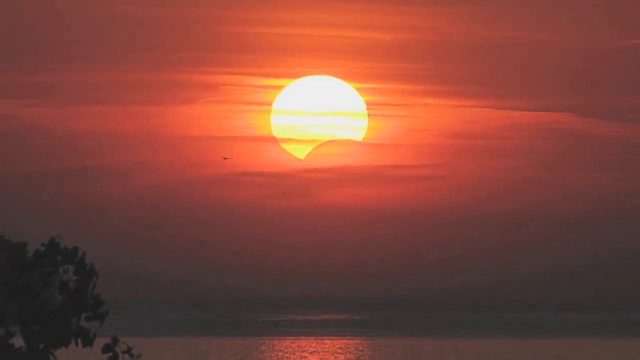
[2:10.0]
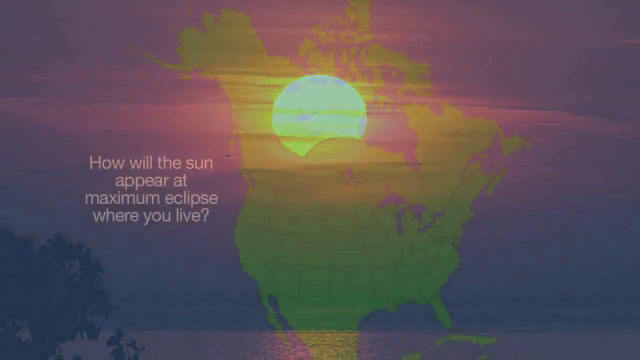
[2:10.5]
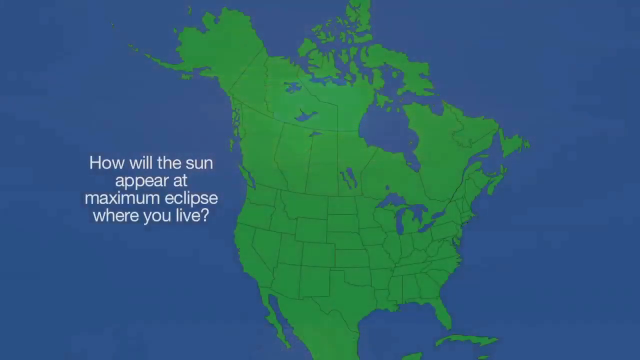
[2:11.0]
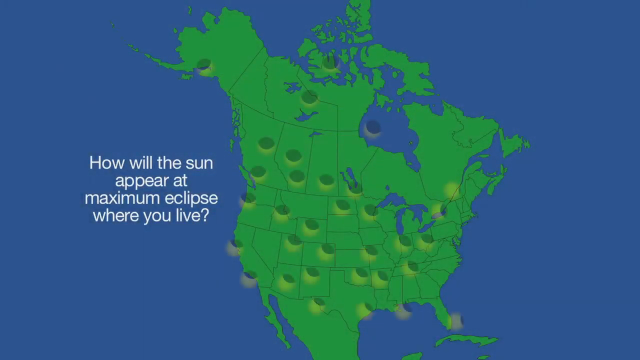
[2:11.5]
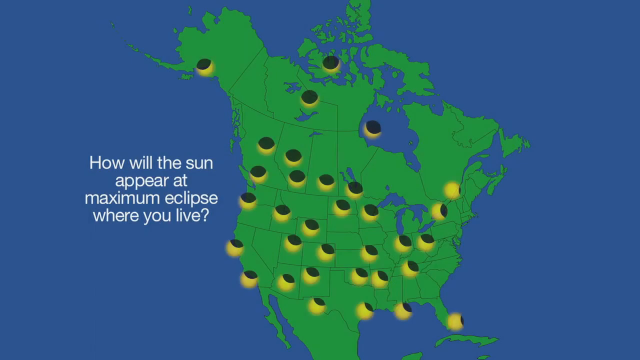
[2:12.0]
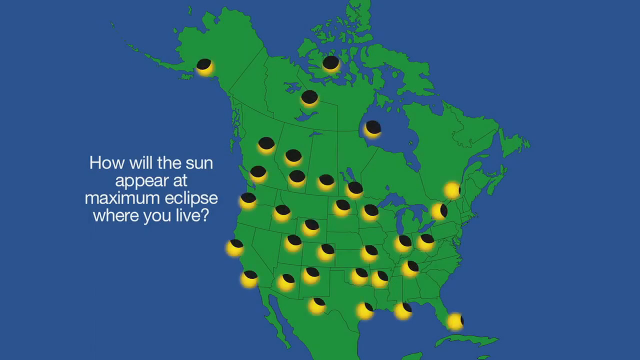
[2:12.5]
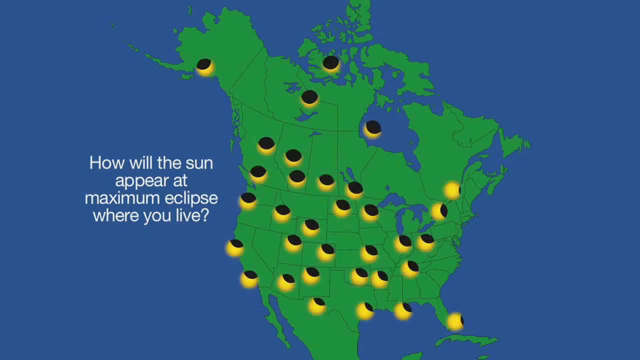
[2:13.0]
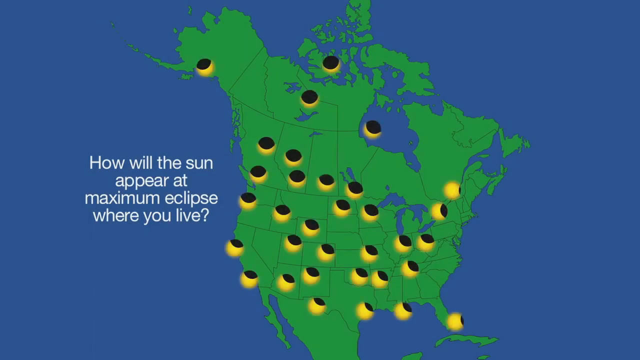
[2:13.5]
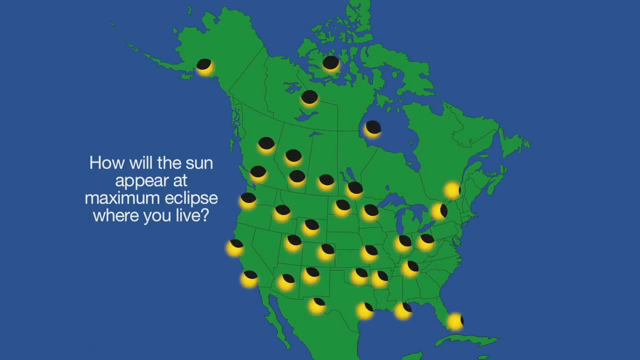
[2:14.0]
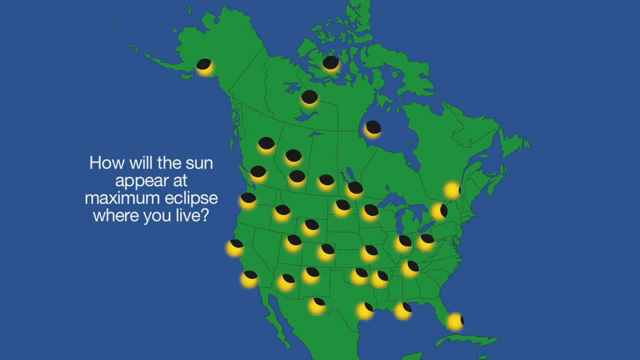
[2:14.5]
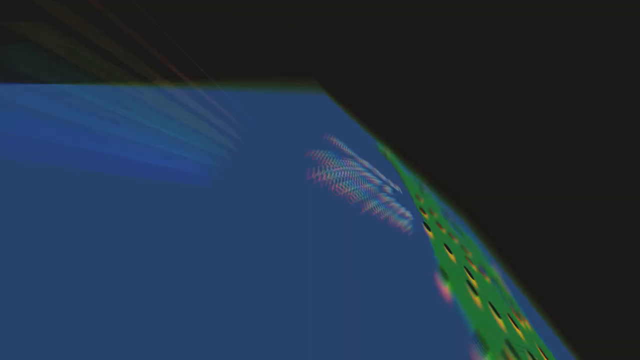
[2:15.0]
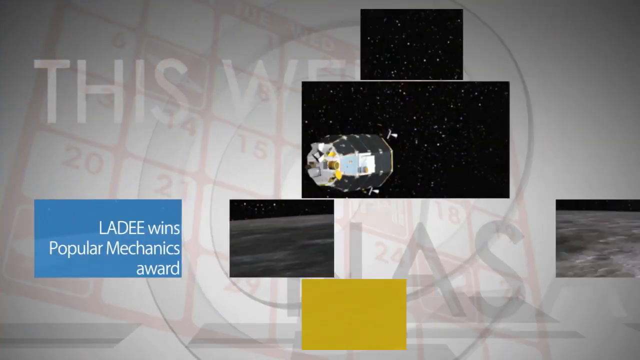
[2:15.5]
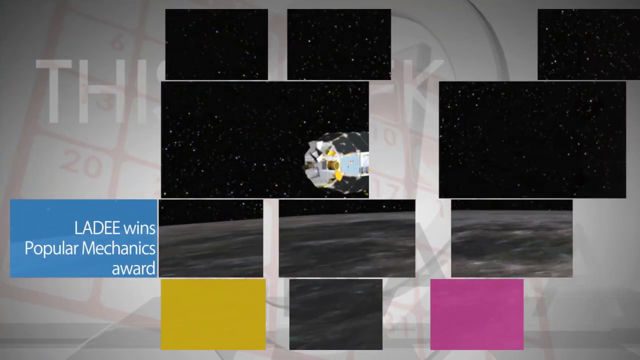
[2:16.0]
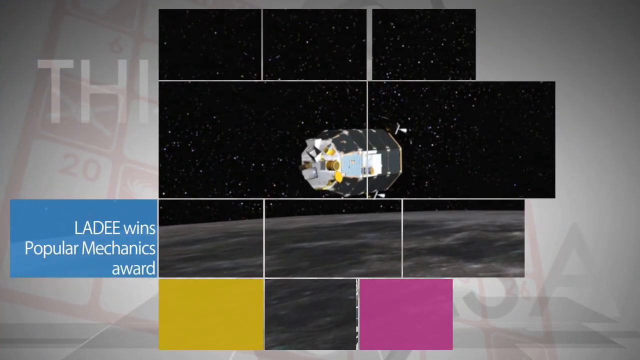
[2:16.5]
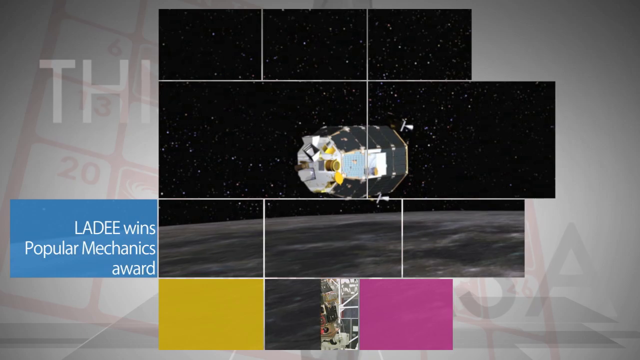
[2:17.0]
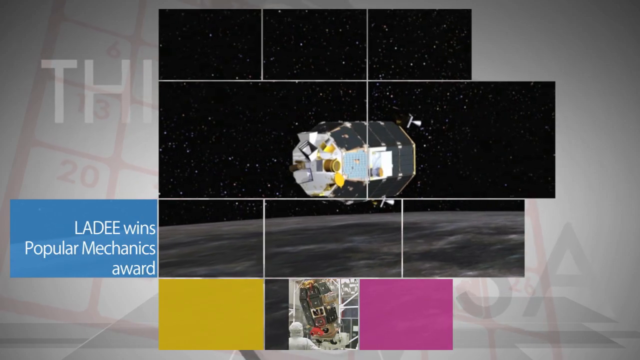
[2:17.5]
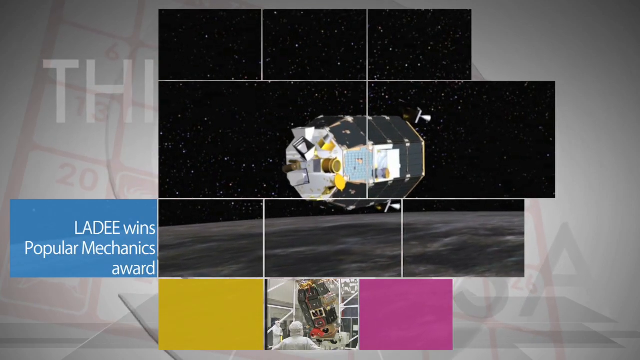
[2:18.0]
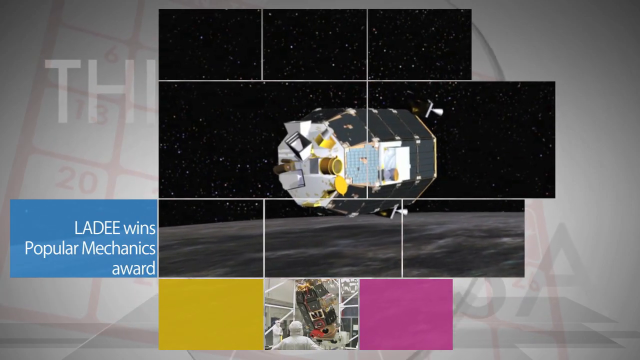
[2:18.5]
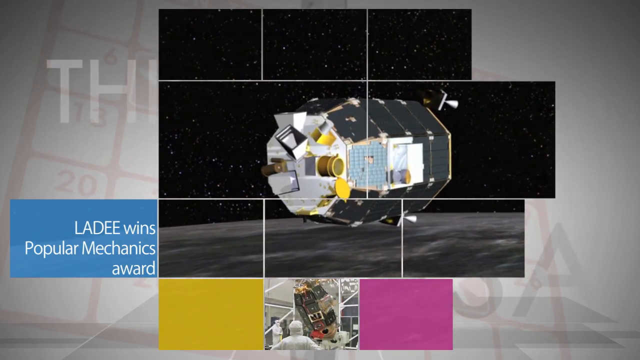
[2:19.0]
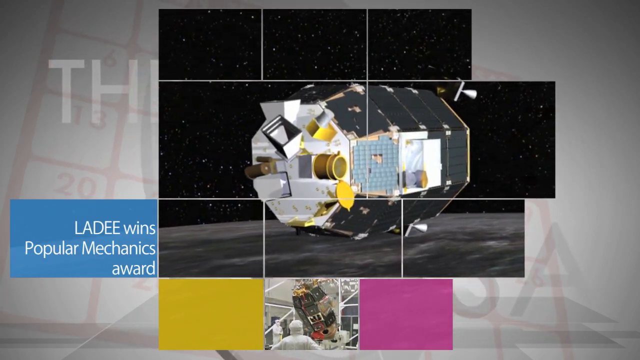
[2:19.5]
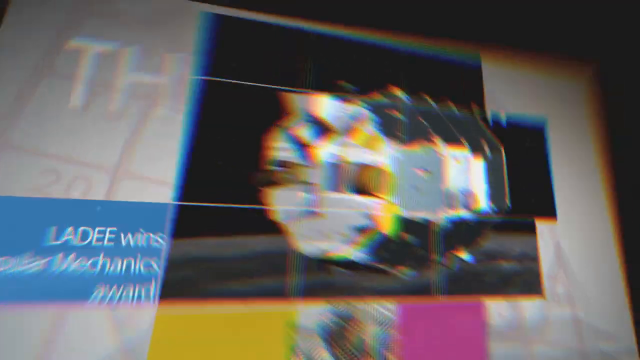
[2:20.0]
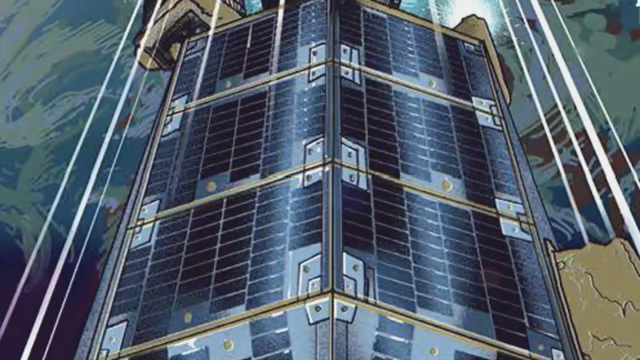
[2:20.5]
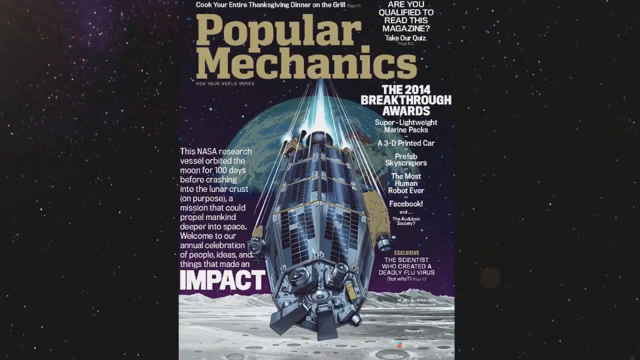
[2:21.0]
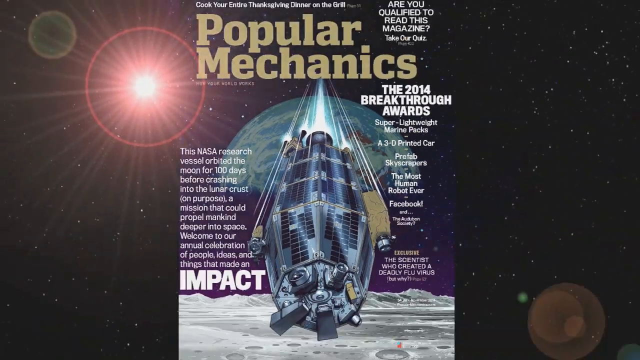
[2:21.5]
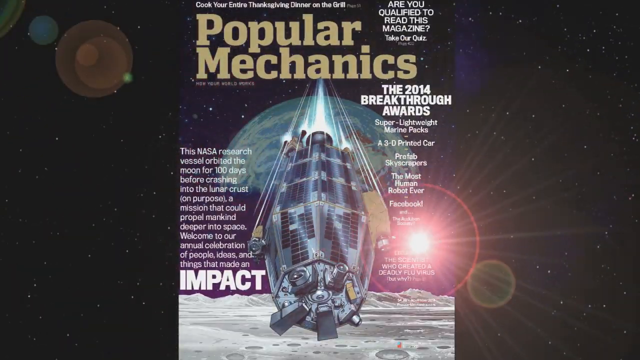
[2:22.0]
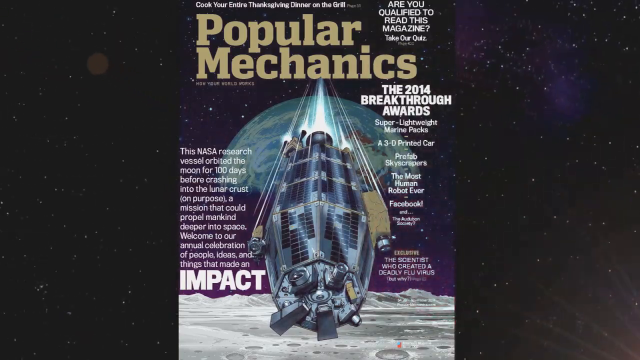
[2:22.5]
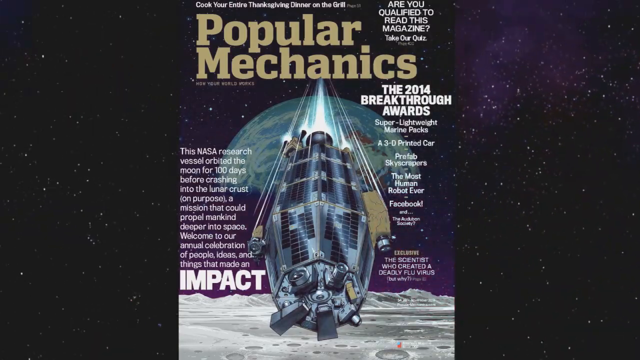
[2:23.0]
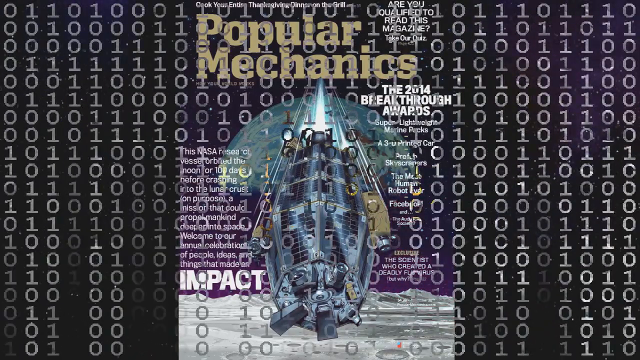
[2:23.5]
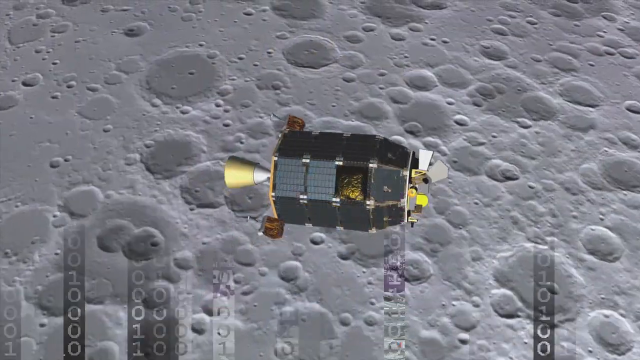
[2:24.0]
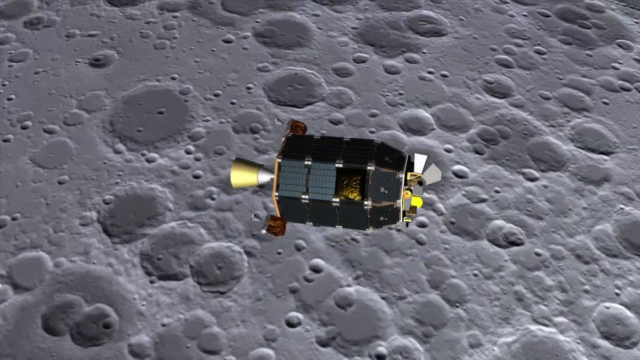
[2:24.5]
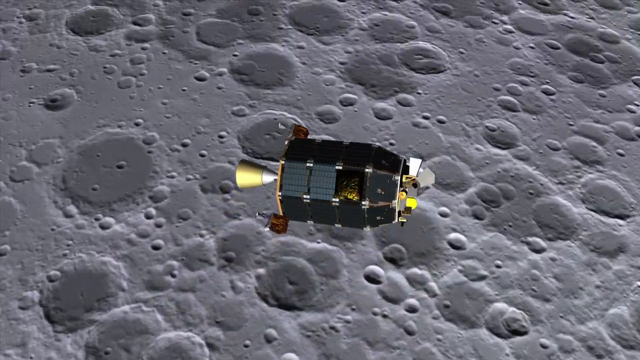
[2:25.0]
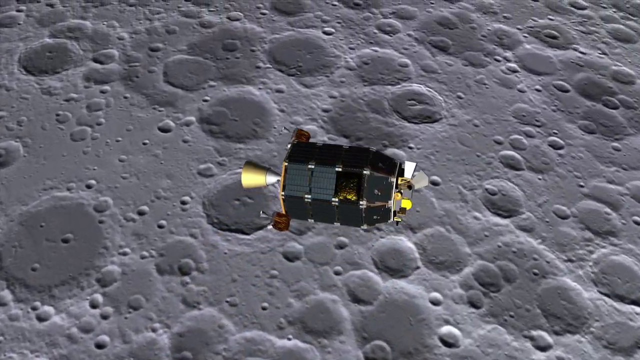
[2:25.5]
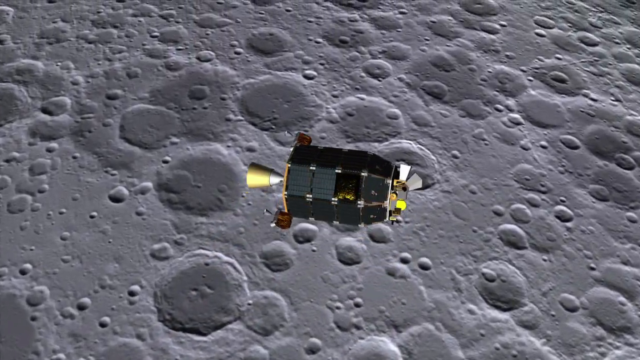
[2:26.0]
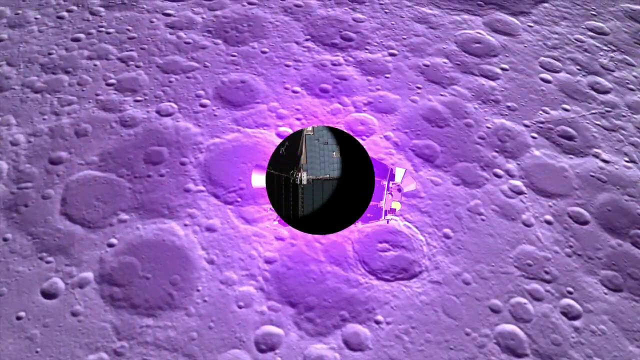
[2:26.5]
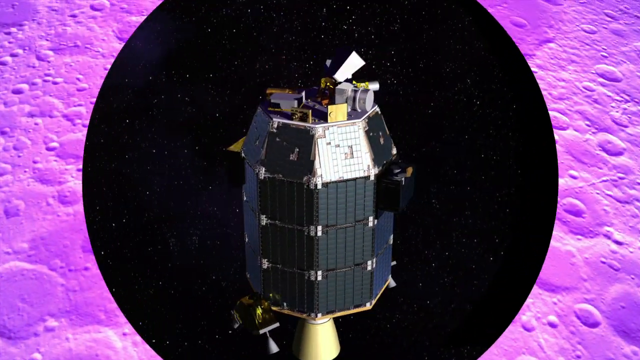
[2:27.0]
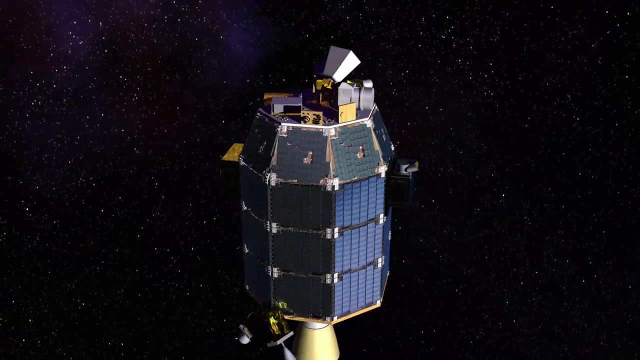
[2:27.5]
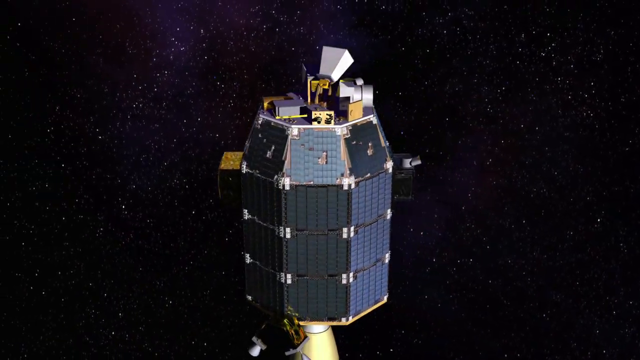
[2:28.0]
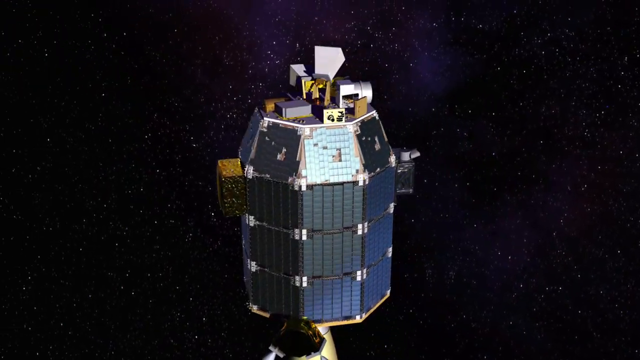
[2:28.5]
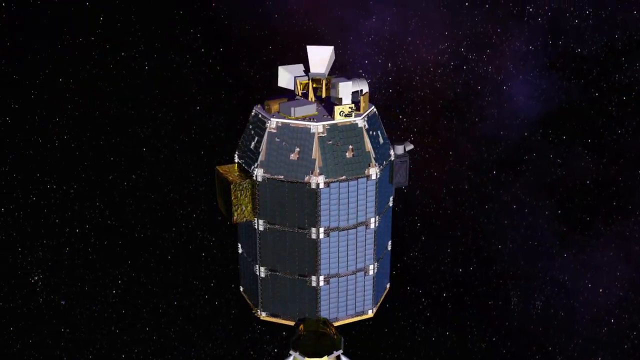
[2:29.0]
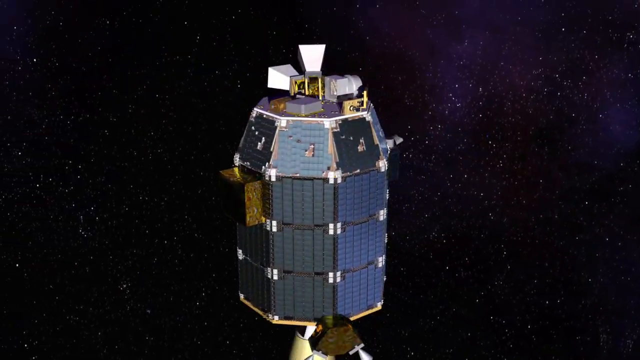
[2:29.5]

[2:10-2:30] An image shows a hazy, foggy, somewhat cloudy sunset, very bright orange and yellow in front of the Sun. A map of North America follows, showing what the eclipse will look like across the United States, Canada and Mexico, with the text "how will the Sun appear at maximum eclipse where you live". The video then moves to This Week at NASA, with an image of a satellite dish in space and the text "LADEE wins Popular Mechanics Award", with LADEE in capitals. It zooms in on the space shuttle. The Popular Mechanics magazine cover reads "are you qualified to read this magazine take our quiz", "the 2014 Breakthrough Awards", "this NASA research vessel orbited the moon for a hundred days before crashing into the lunar crust on purpose", "its mission that could propel mankind deeper into space" and "welcome to our annual celebration of people ideas and things that made an impact". A graphic then shows the satellite orbiting the moon and crashing into it.